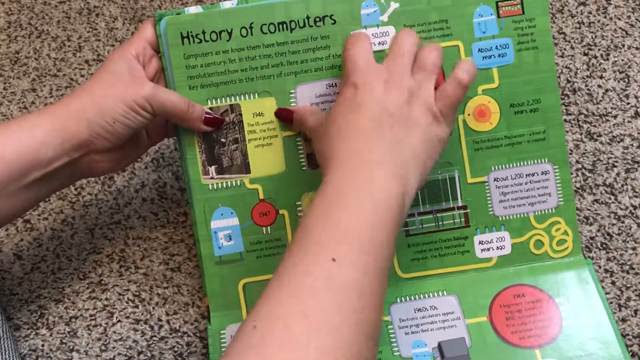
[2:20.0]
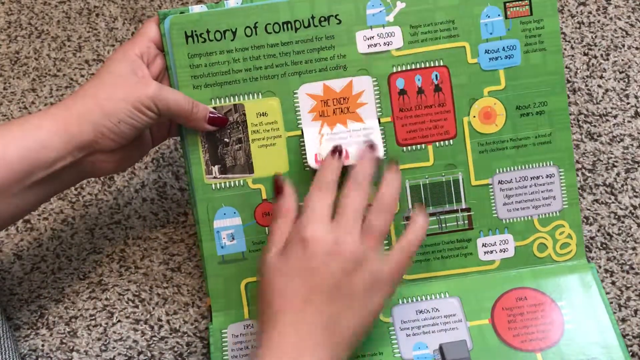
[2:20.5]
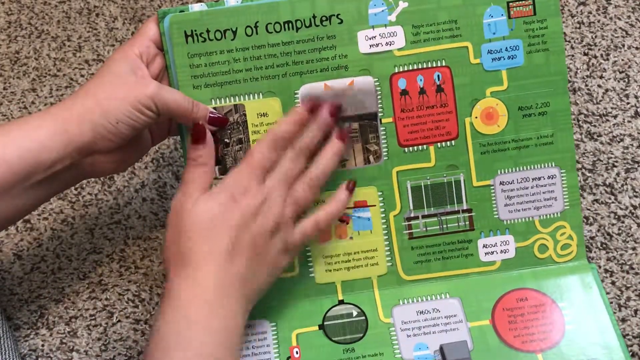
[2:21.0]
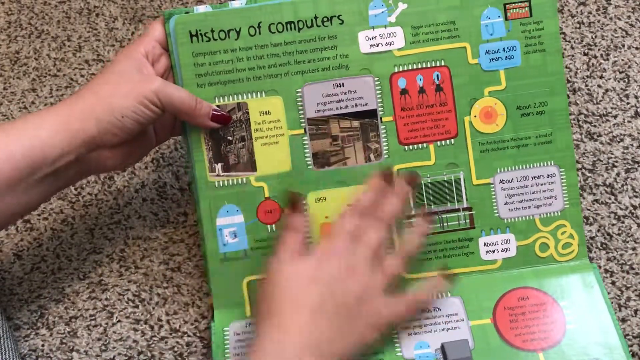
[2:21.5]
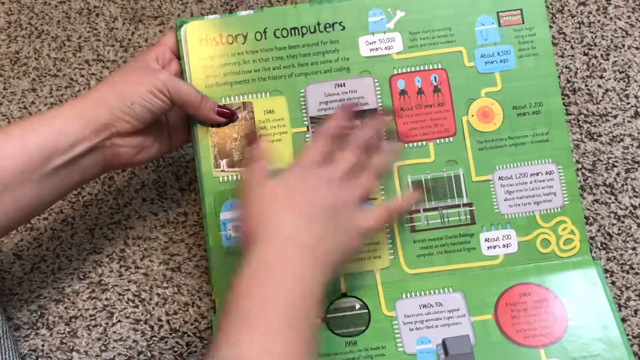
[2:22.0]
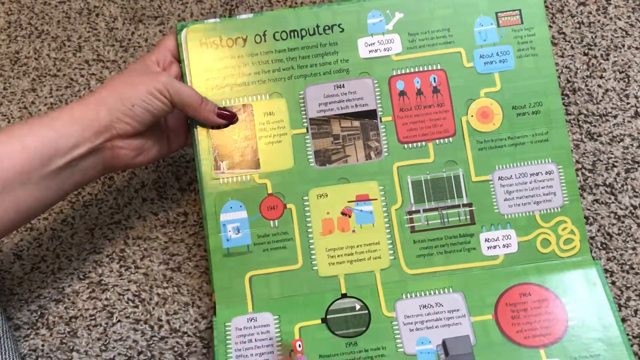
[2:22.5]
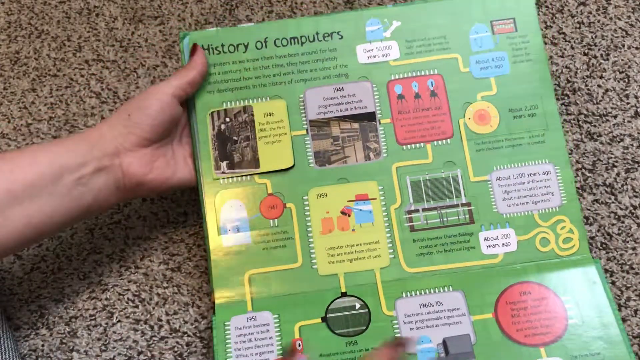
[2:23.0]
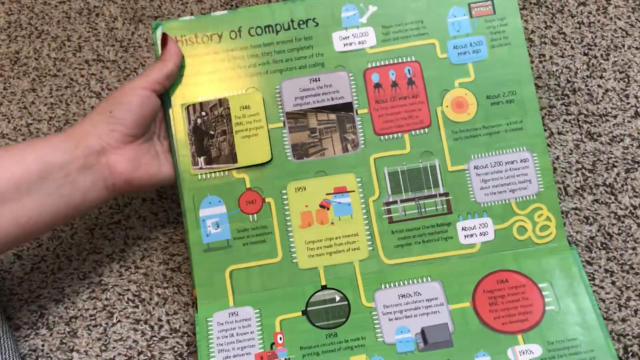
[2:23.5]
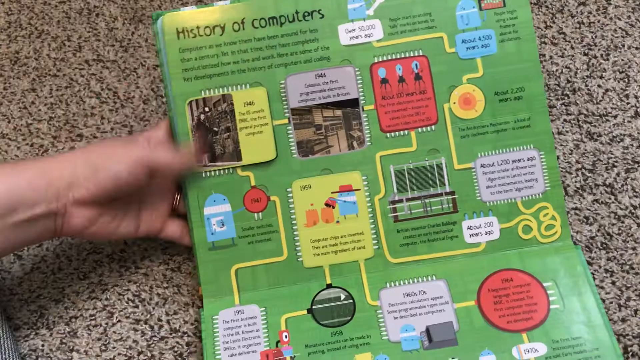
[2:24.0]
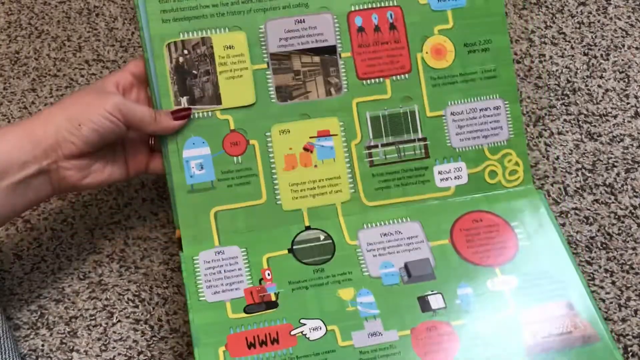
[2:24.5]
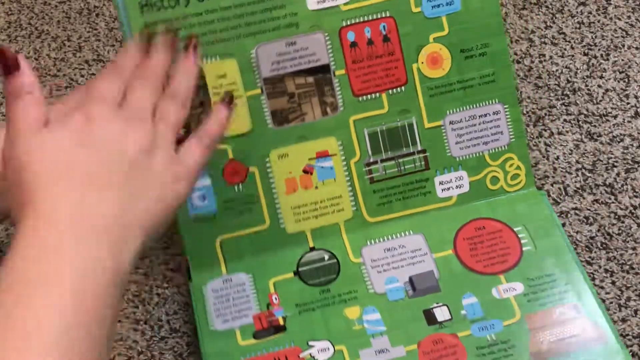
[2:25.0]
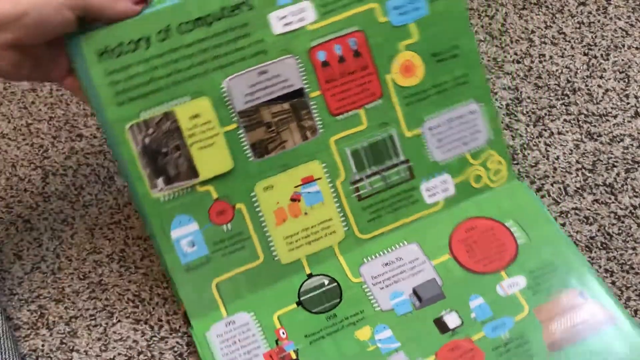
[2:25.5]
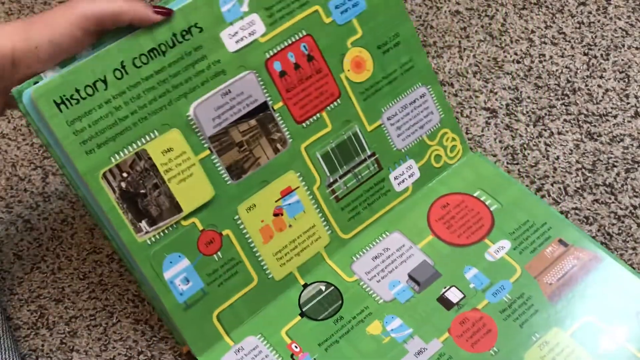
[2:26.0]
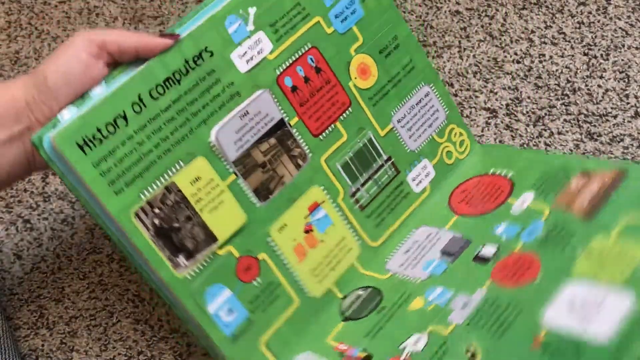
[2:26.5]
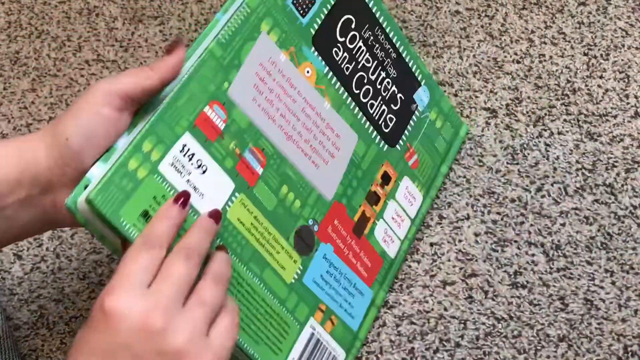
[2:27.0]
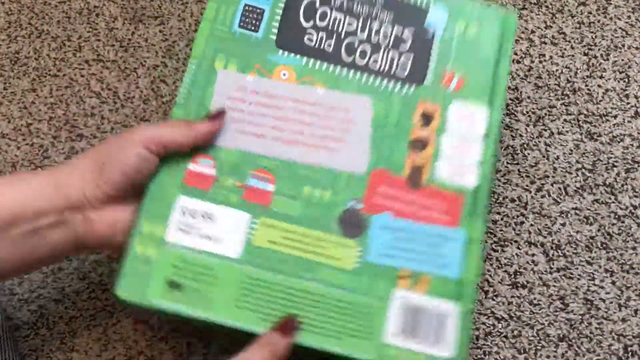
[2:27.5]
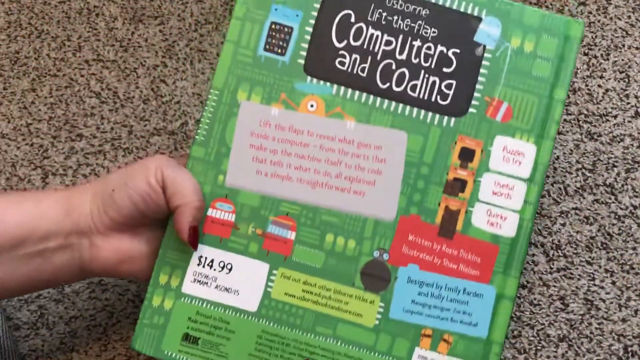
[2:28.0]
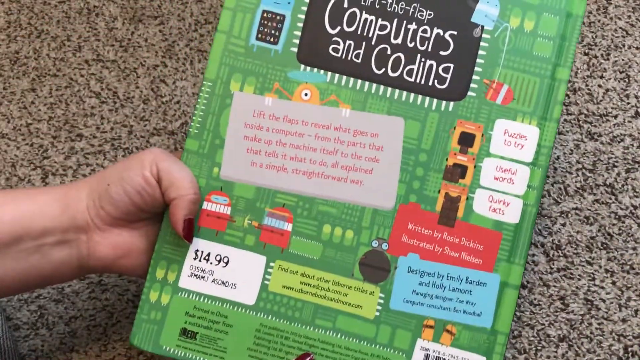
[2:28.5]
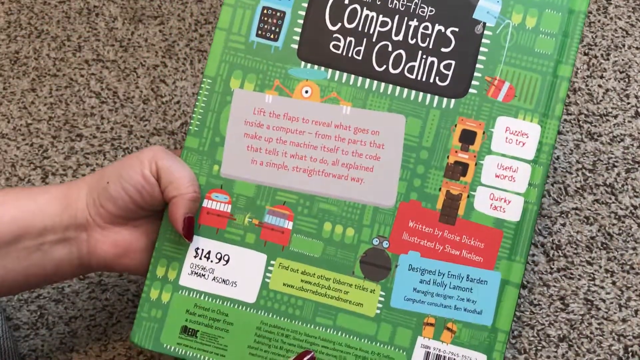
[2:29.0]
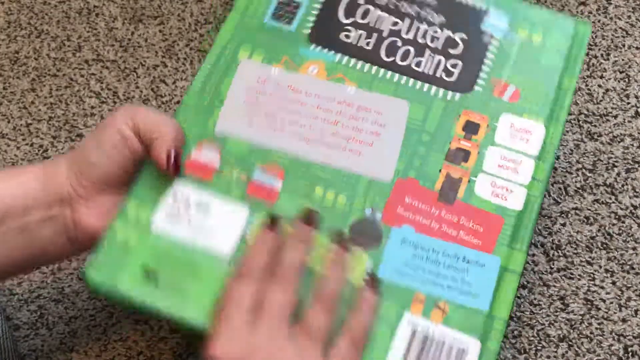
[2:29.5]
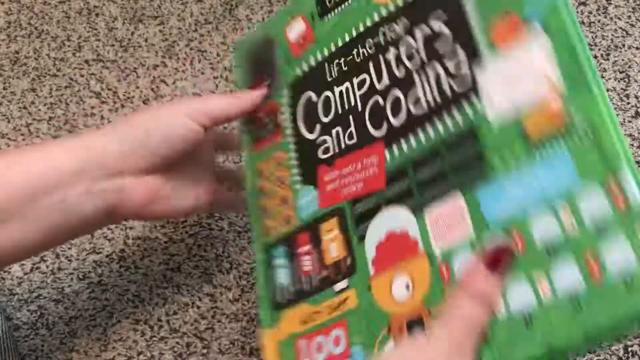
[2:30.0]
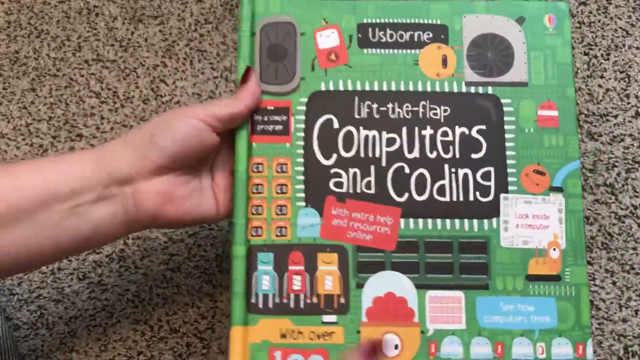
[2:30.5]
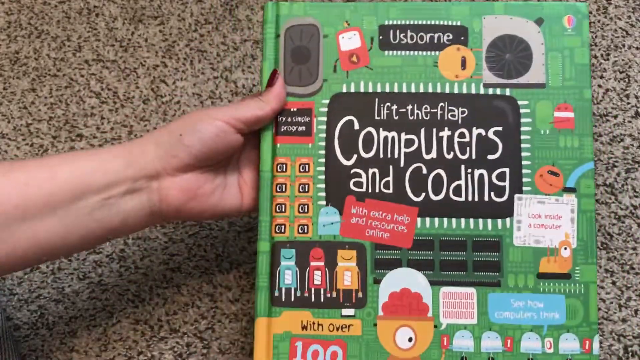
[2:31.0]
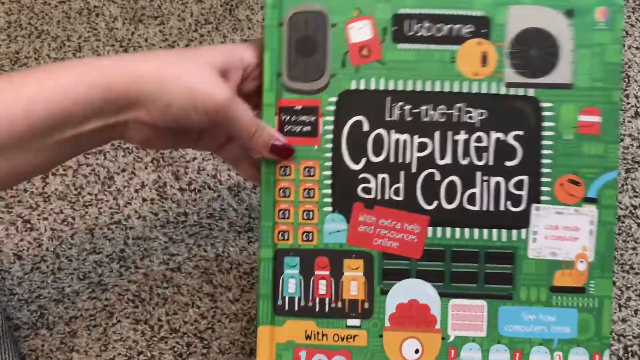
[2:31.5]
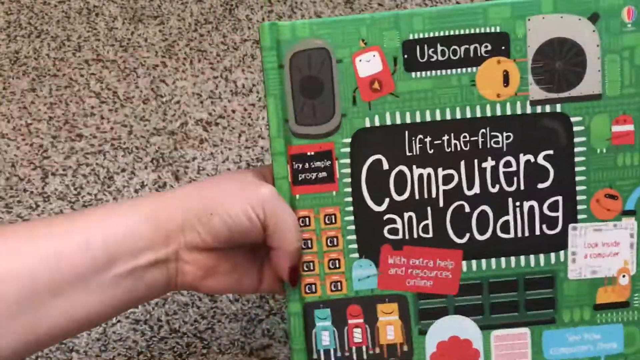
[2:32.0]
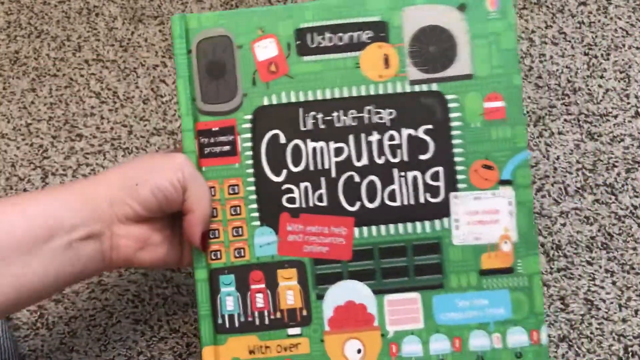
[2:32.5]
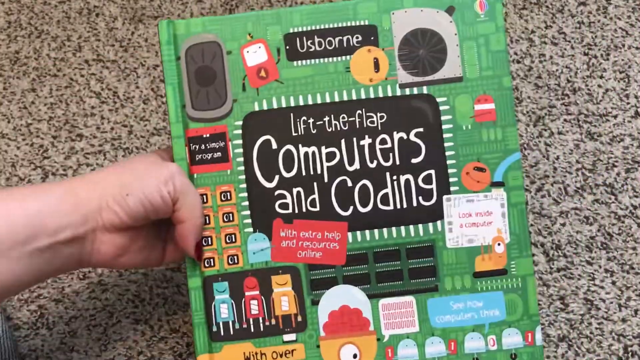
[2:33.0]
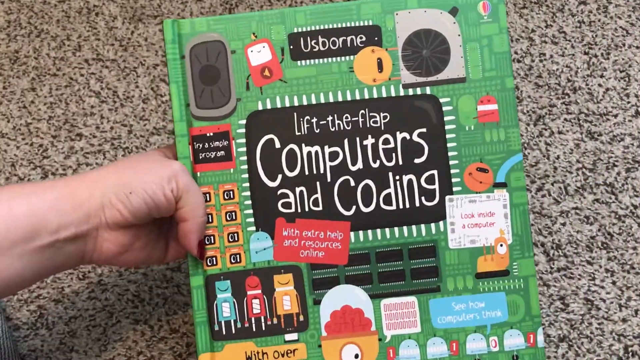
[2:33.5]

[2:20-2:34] The woman makes a circular motion over the whole "History of computers" page, whose flowchart runs from start to finish, from how computers began through the important events leading up to the modern age of computing. She then closes the book to show the back, where it says "Lift the flap computers and coding", along with a few other boxes: a red box, a blue box and a green box. There is also a price tag of $14.99 and clip art of very colorful, kid-friendly robots. She flips the book back to the front cover, where the whole title reads "U.S. Born lift the flap computers and coding", and then grabs the spine of the book.